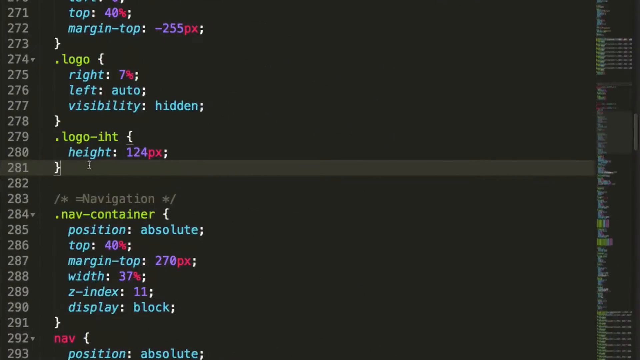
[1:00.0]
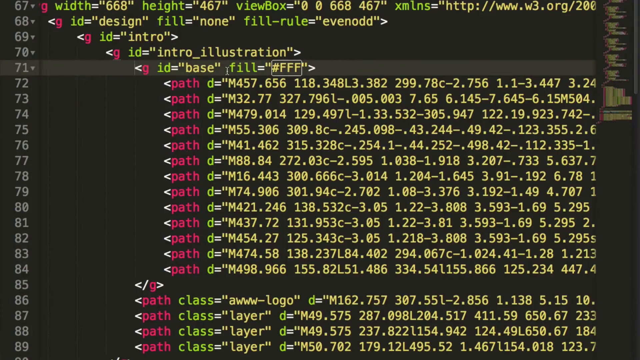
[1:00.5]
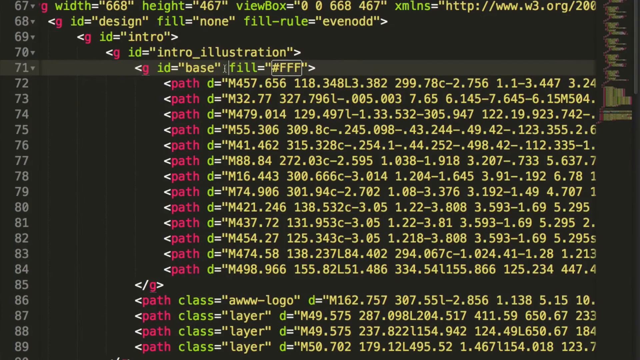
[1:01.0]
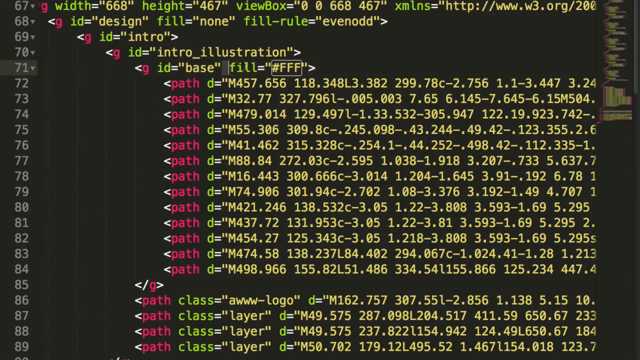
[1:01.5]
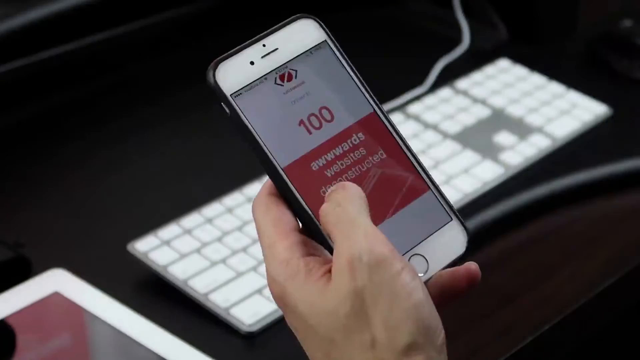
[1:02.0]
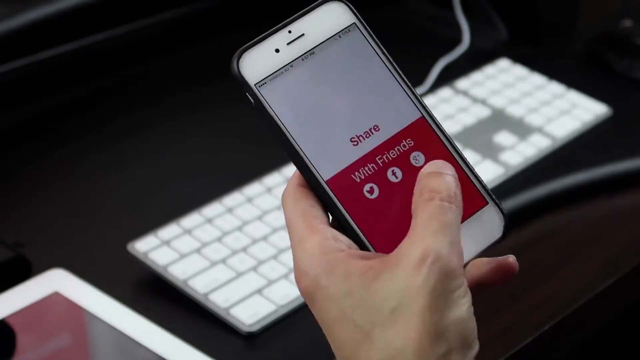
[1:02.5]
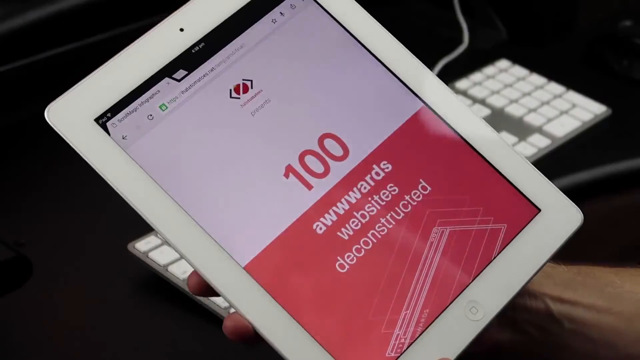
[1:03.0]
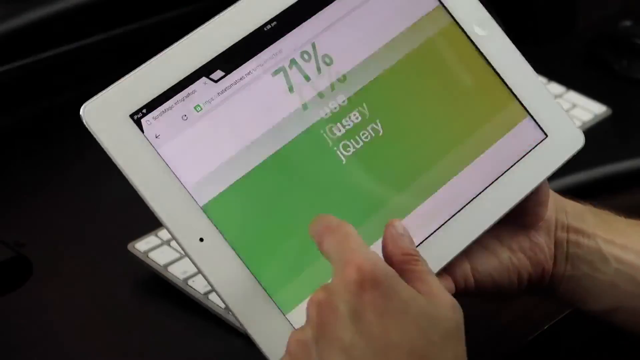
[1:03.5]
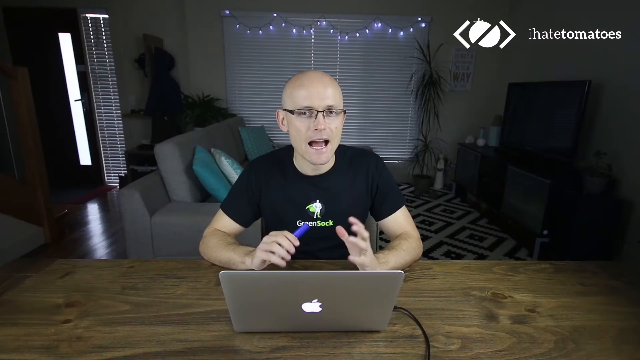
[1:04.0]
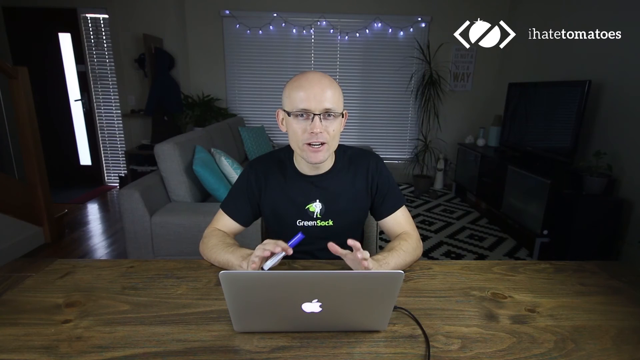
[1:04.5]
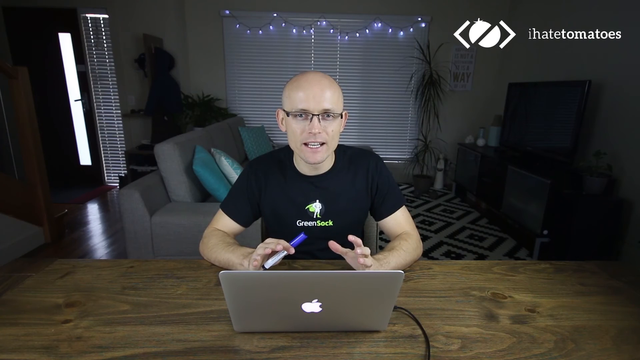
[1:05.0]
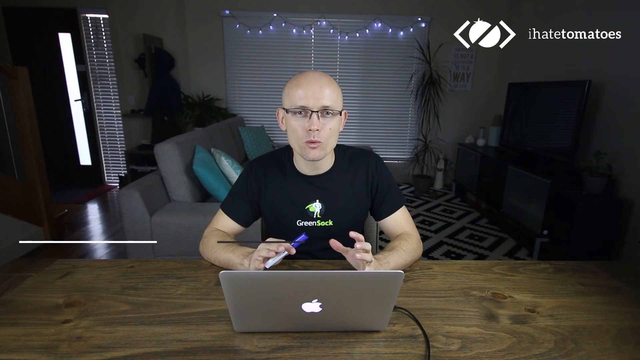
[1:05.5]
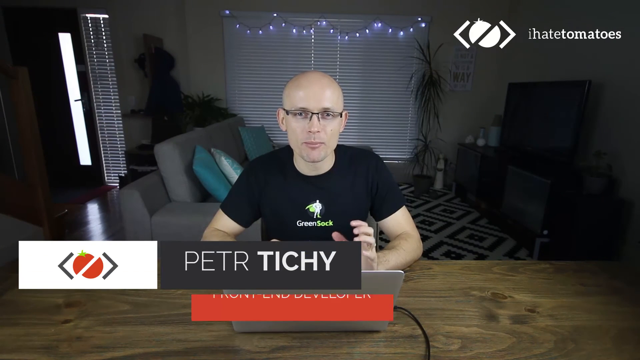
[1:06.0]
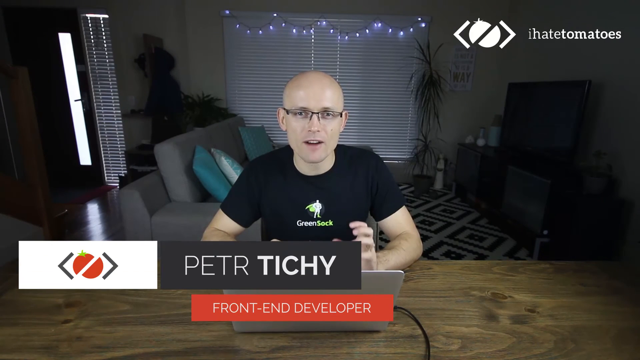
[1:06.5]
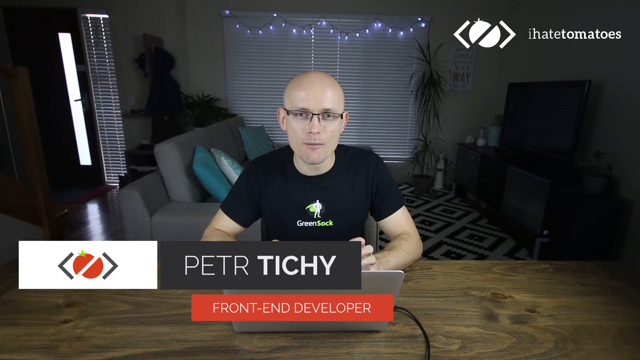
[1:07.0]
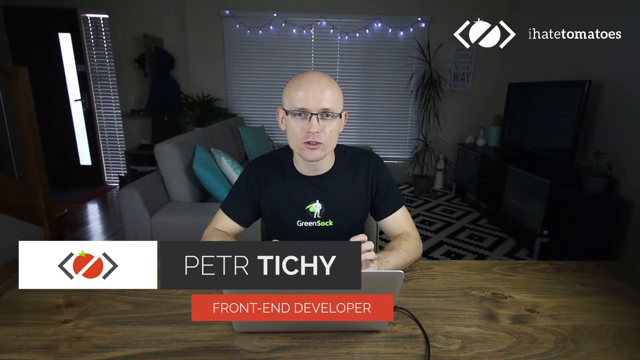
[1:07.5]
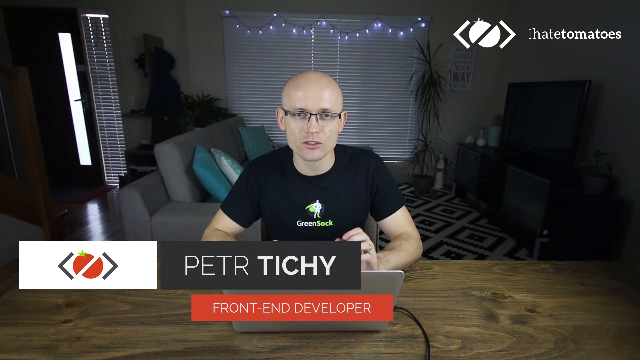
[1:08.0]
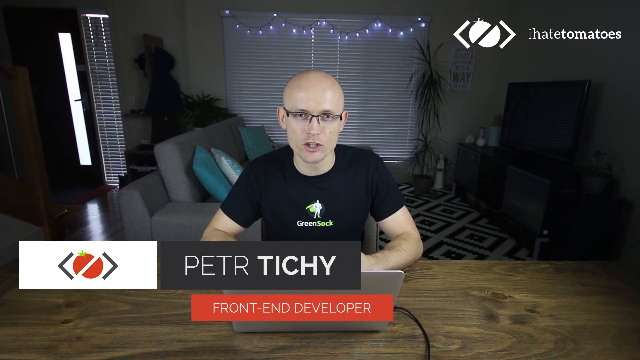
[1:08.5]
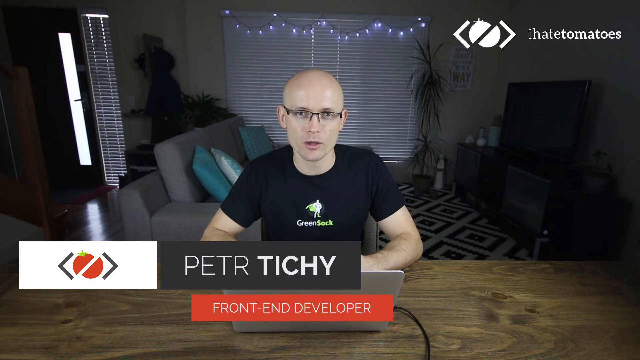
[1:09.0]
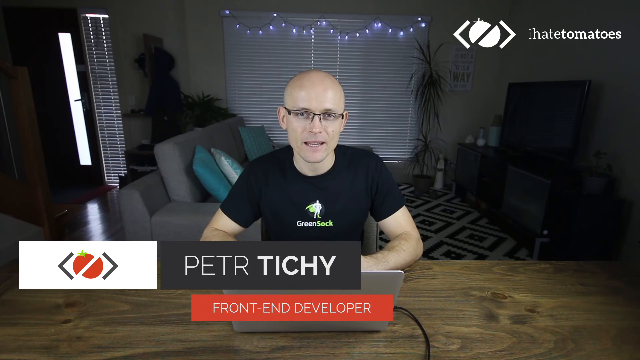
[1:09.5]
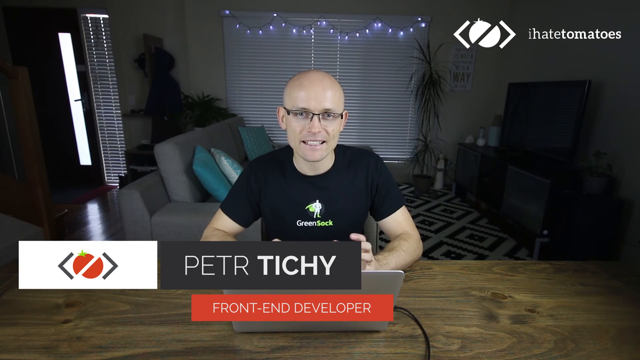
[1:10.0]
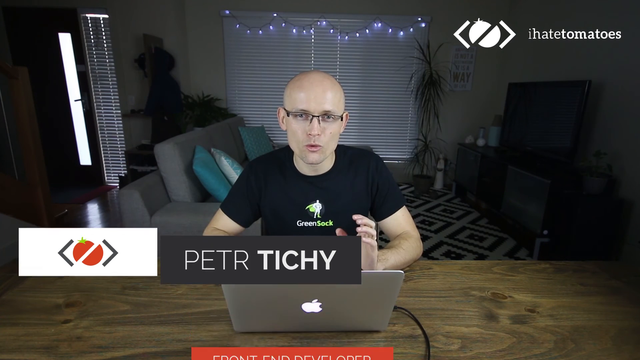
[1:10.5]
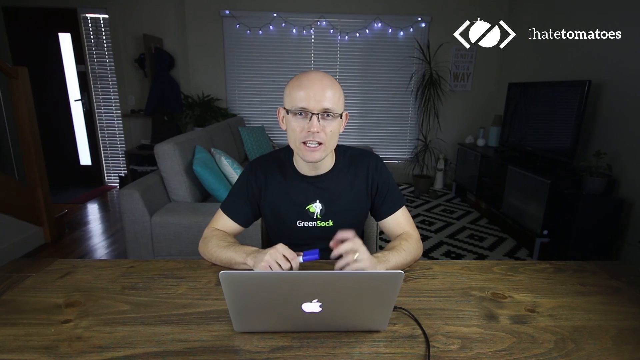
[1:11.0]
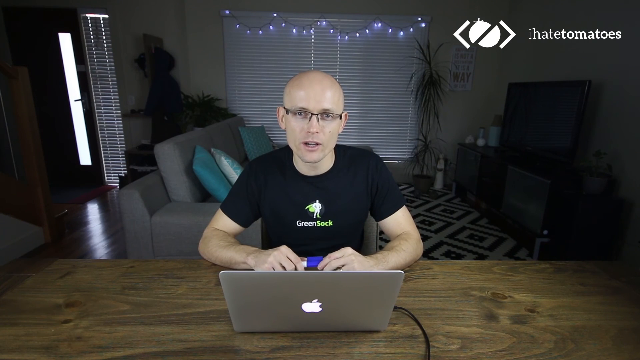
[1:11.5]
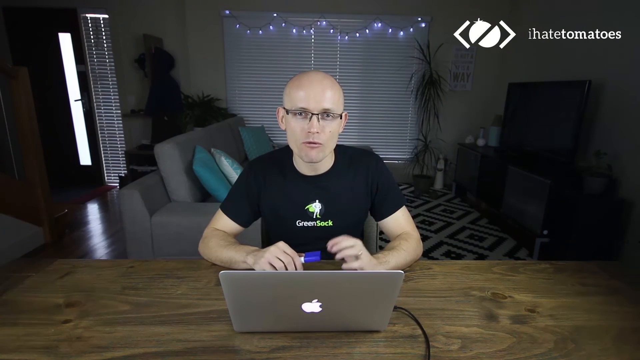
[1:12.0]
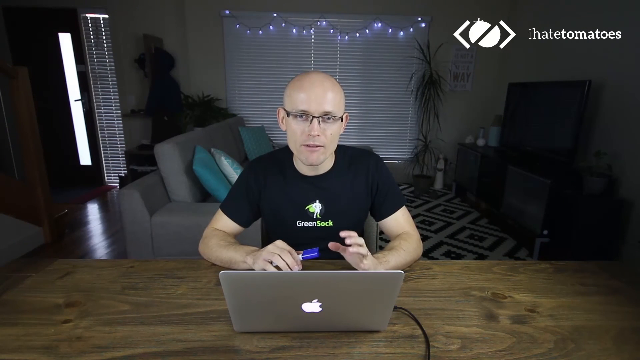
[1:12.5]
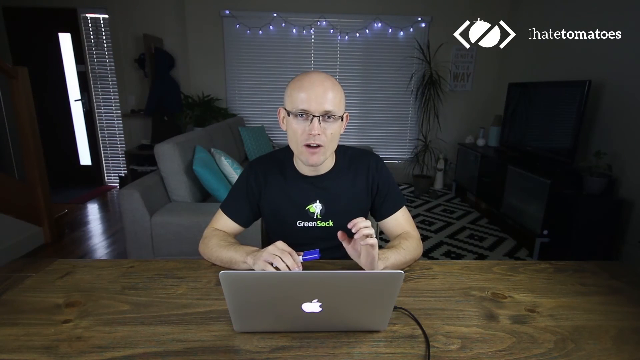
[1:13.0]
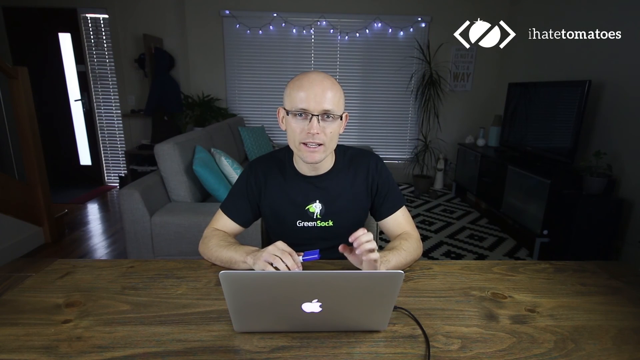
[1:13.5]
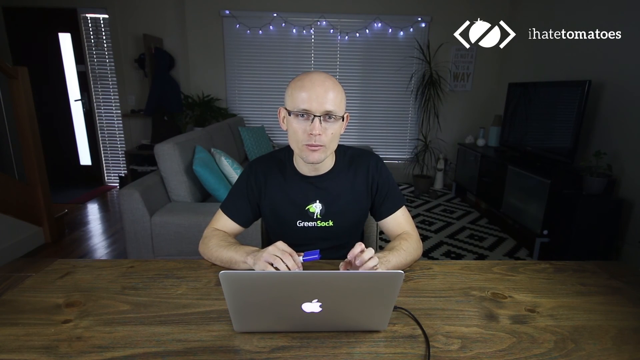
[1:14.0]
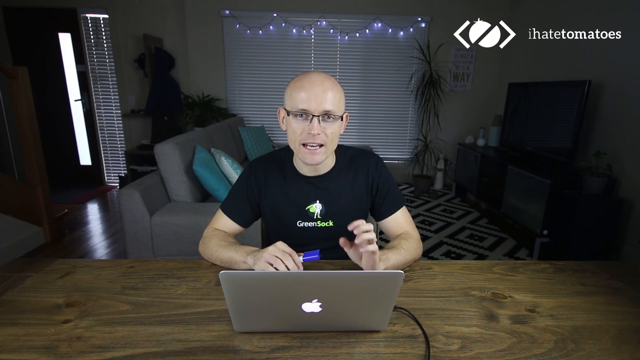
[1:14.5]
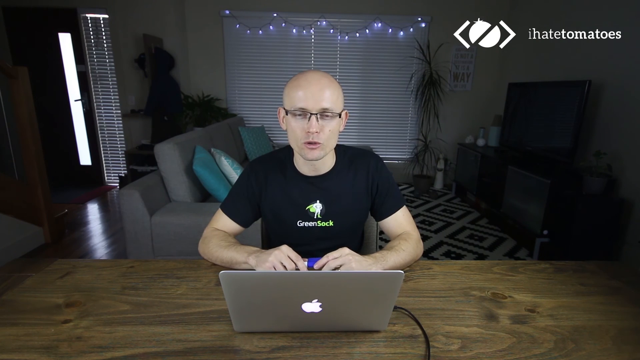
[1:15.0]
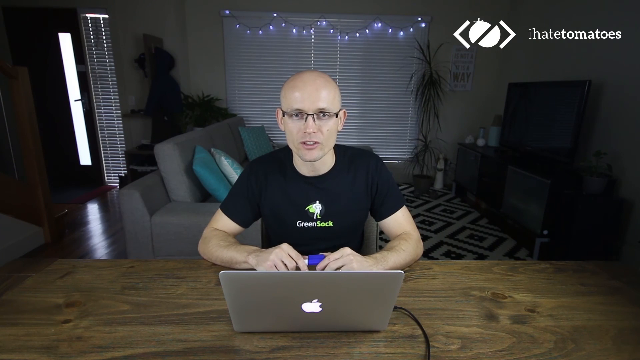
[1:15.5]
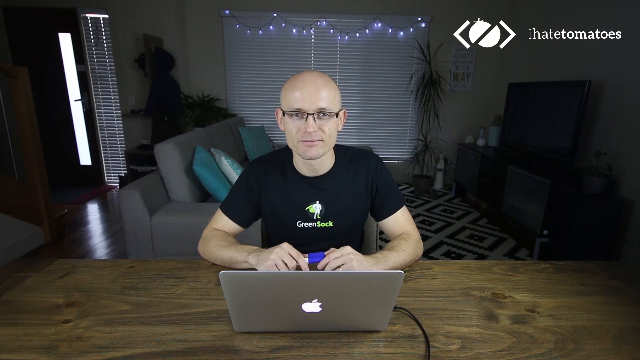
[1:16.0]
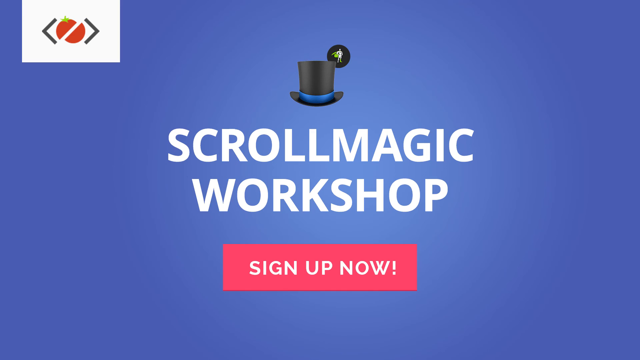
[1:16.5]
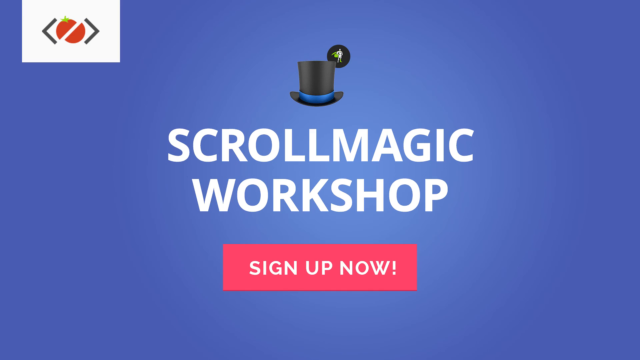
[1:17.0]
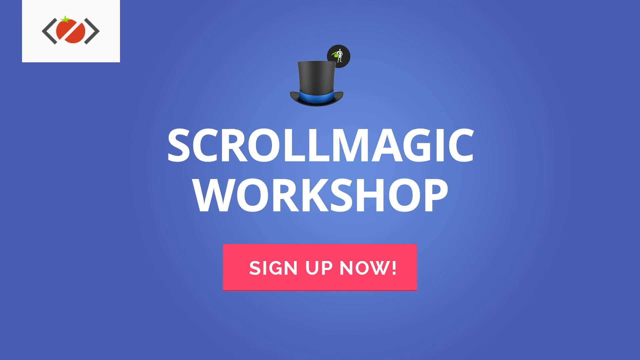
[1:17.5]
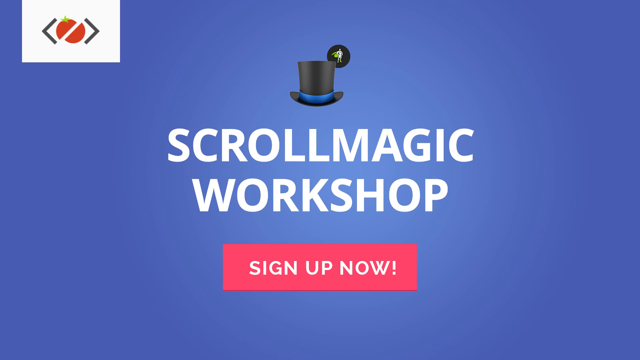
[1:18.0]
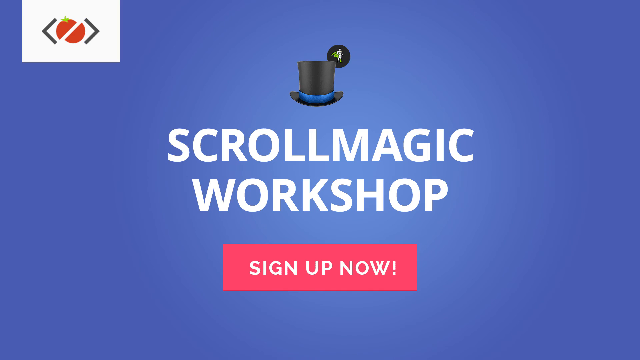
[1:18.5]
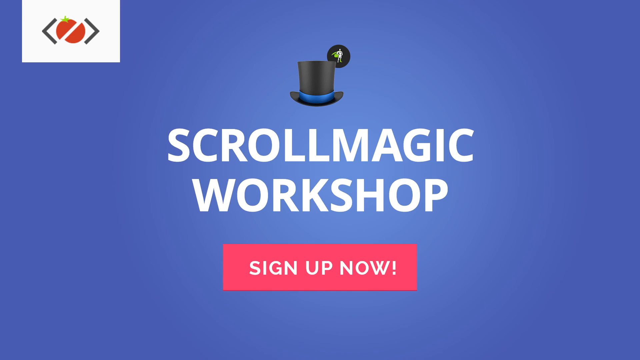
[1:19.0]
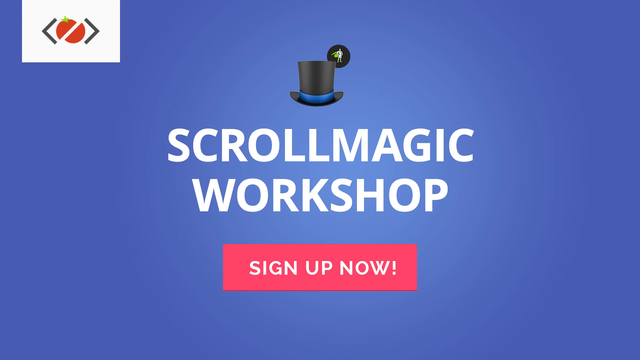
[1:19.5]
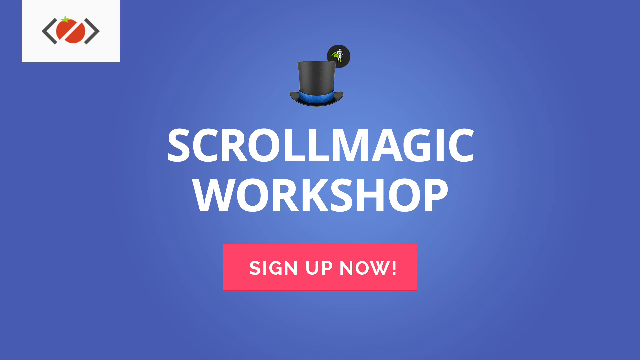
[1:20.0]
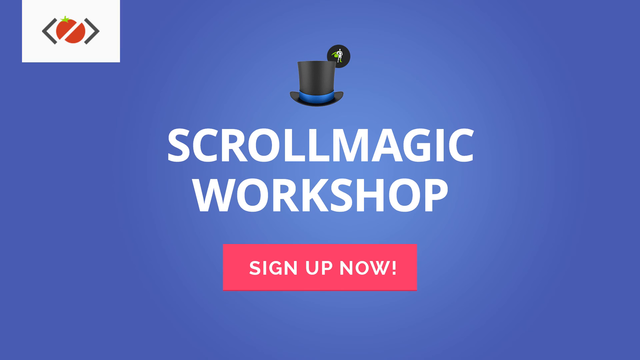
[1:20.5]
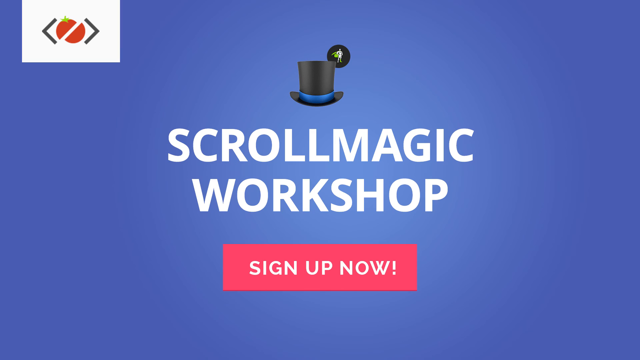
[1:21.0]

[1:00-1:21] A black screen shows lots of programming code in different colours, including red and yellow. A person uses a phone and appears to be viewing the website created with the code, and people are also shown using it on other devices such as a tablet. The video returns to the man in the living room. He is white and bald, wears a T-shirt with a logo on it, holds a writing utensil, and sits at a desk with an Apple laptop in front of him. There is a large television and a dresser. The logo of the brackets with the tomato appears on an entirely white image, with "i hate tomatoes". His logo comes up along with his name and what appears to be his job, front-end developer. Then large words appear that say "scroll magic workshop".